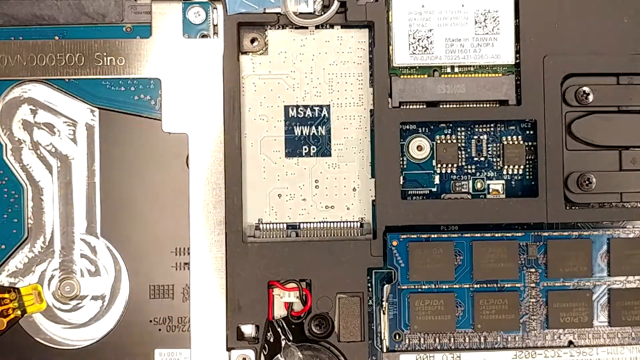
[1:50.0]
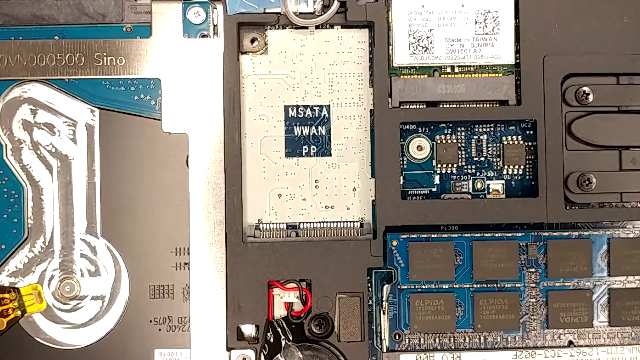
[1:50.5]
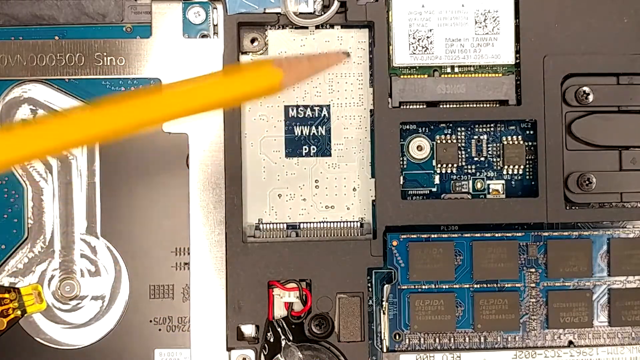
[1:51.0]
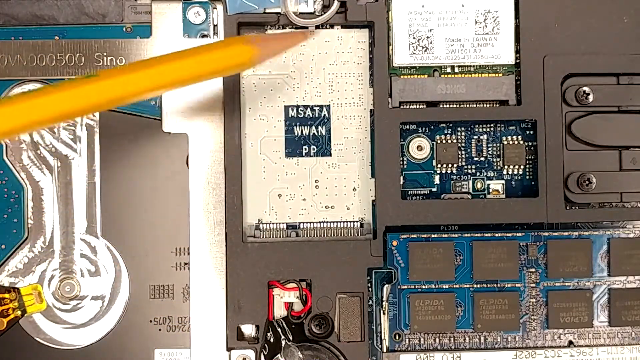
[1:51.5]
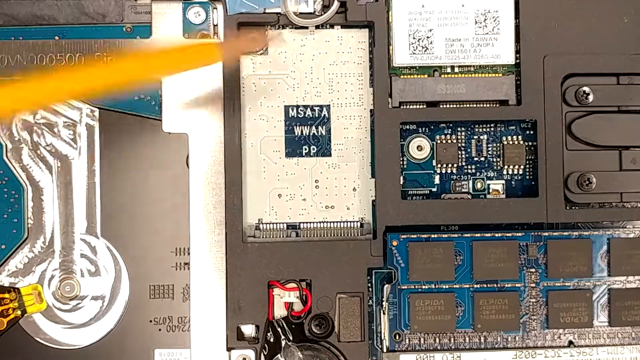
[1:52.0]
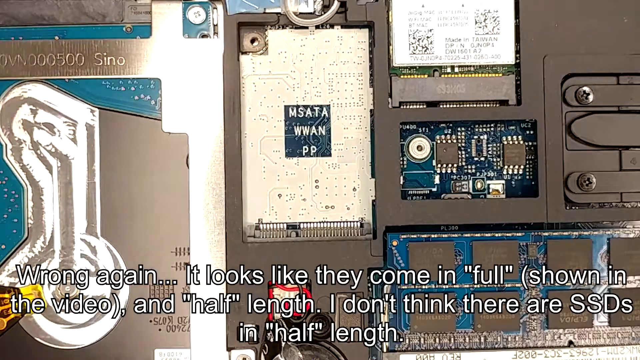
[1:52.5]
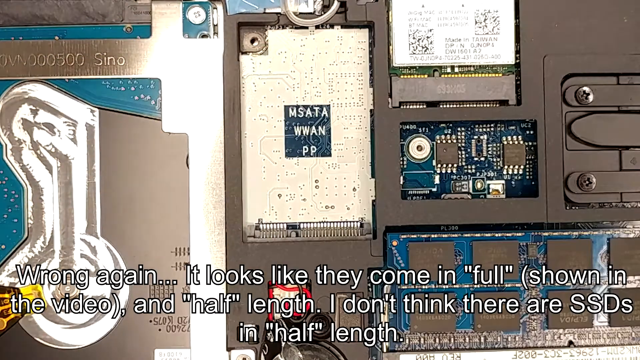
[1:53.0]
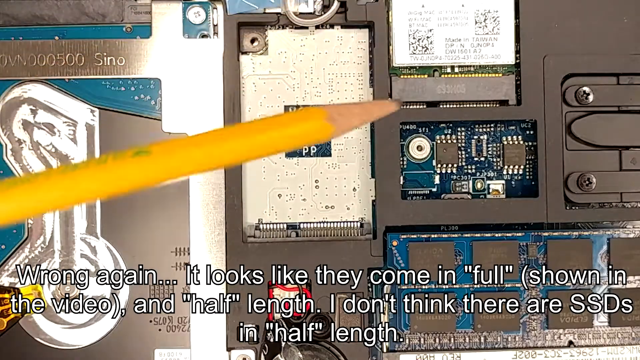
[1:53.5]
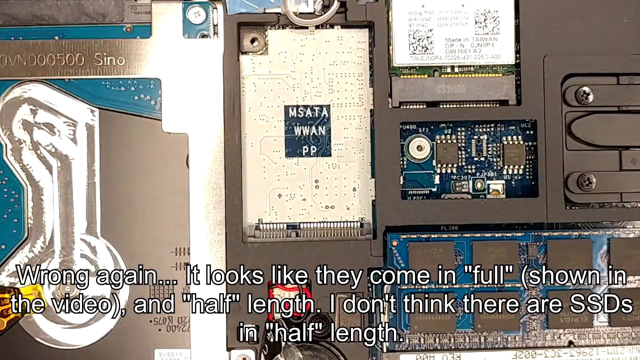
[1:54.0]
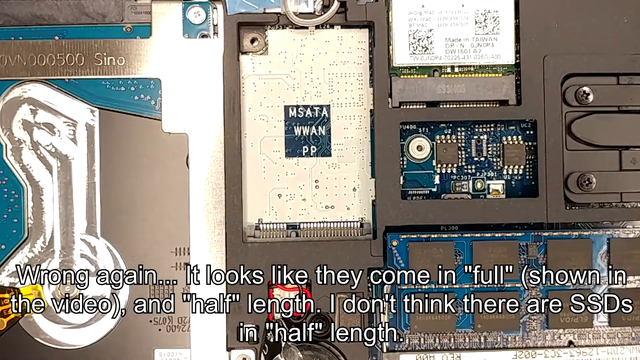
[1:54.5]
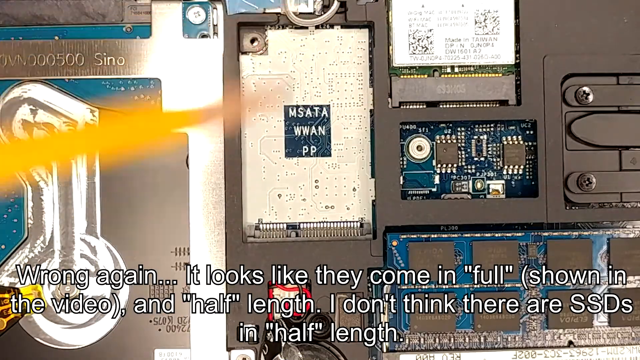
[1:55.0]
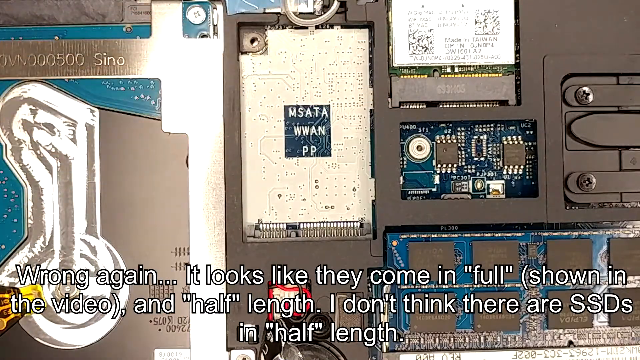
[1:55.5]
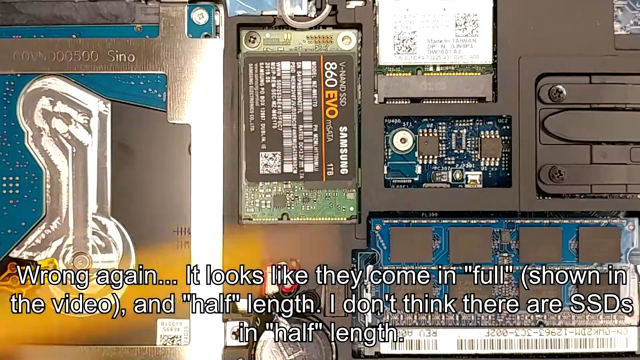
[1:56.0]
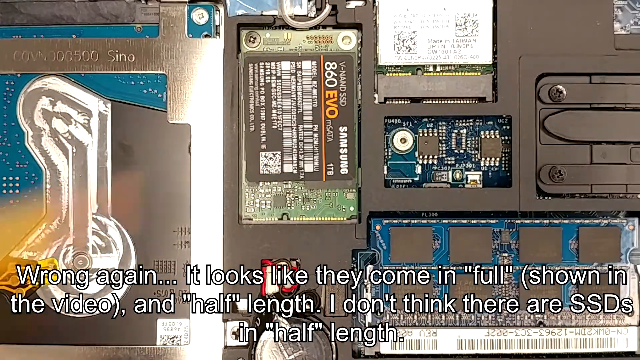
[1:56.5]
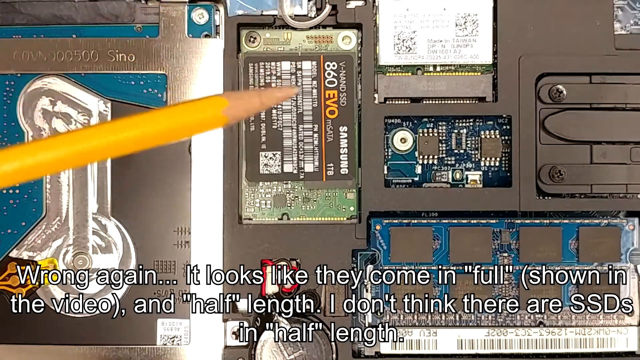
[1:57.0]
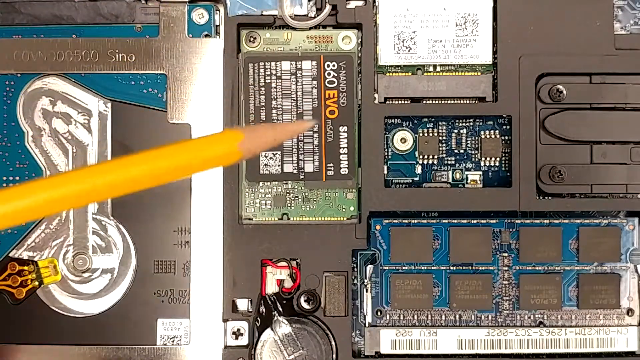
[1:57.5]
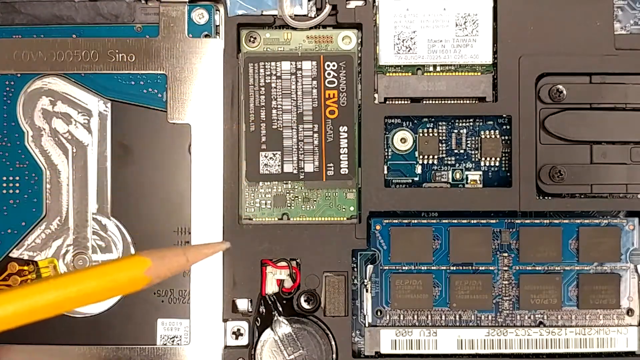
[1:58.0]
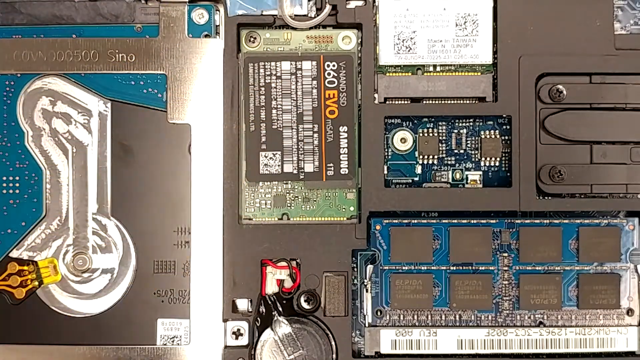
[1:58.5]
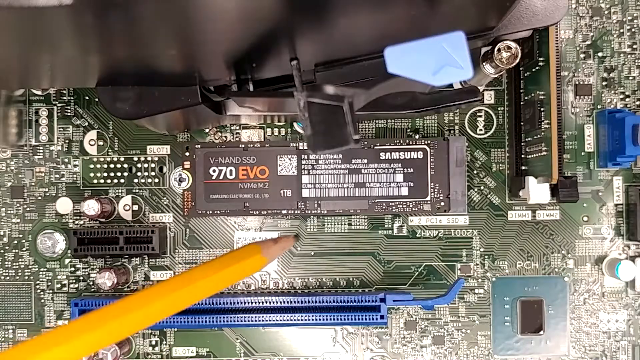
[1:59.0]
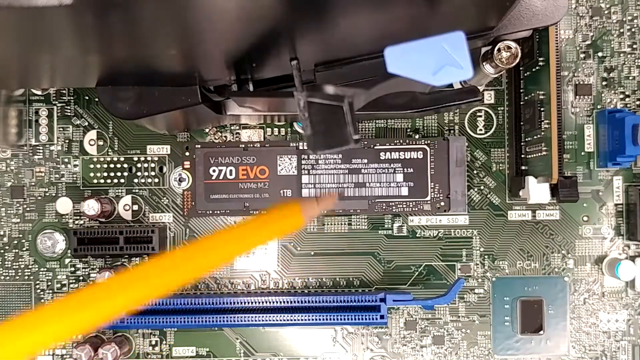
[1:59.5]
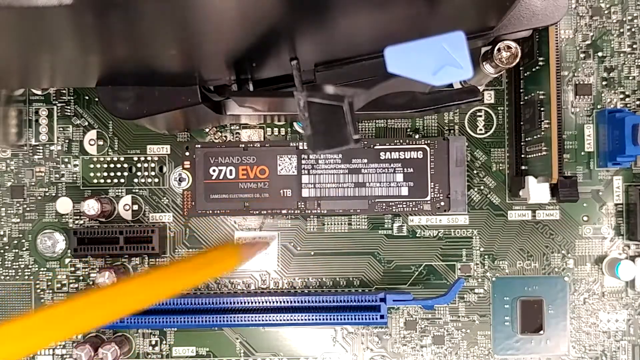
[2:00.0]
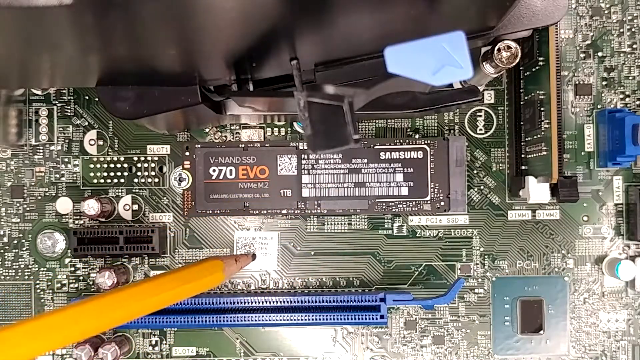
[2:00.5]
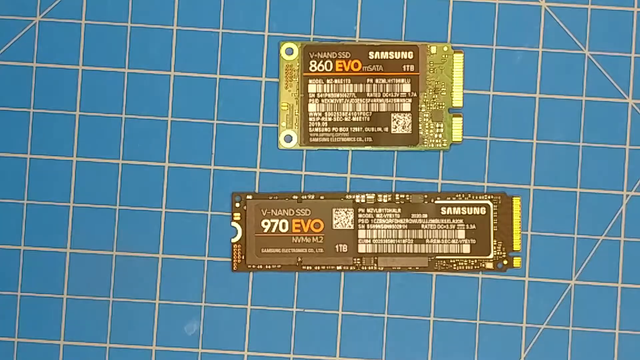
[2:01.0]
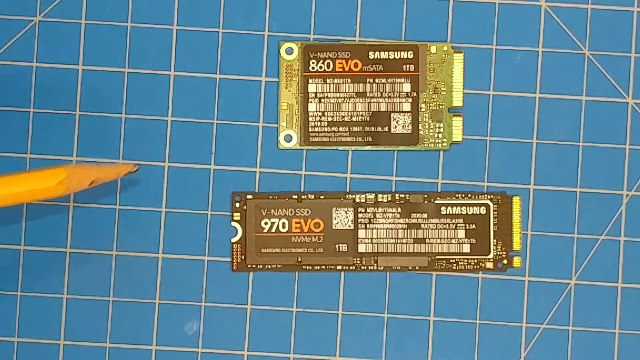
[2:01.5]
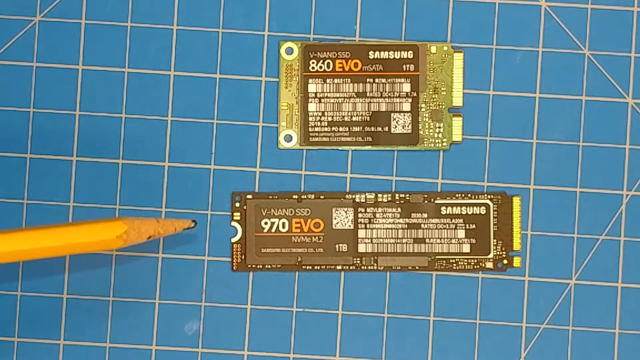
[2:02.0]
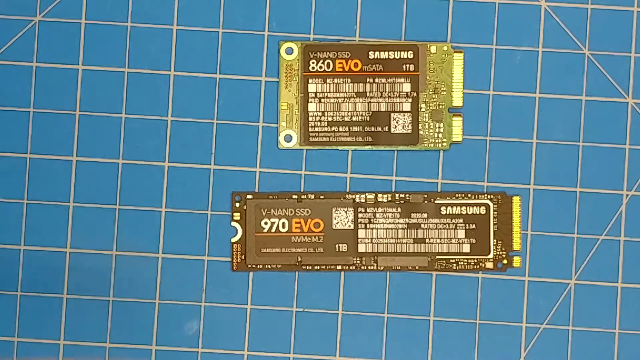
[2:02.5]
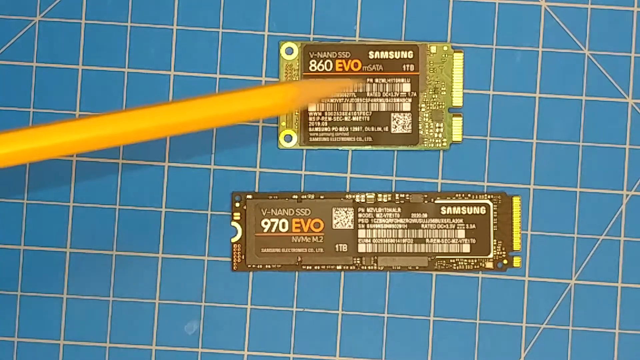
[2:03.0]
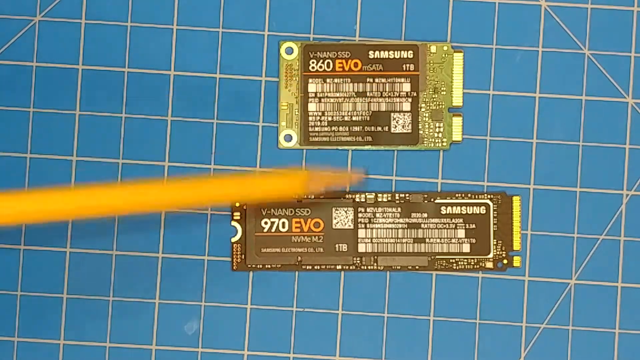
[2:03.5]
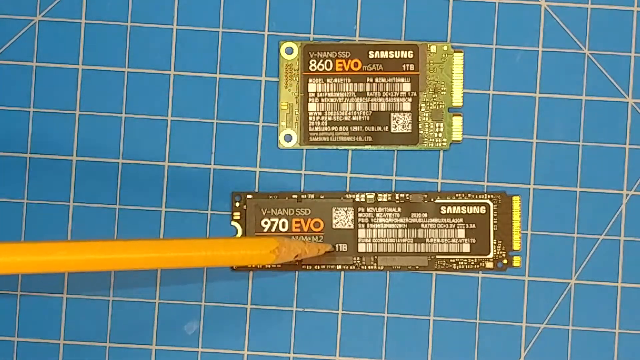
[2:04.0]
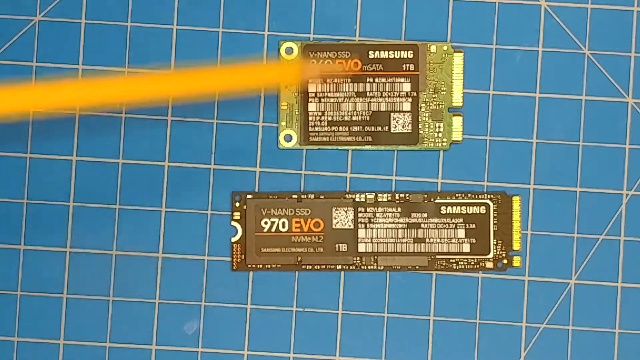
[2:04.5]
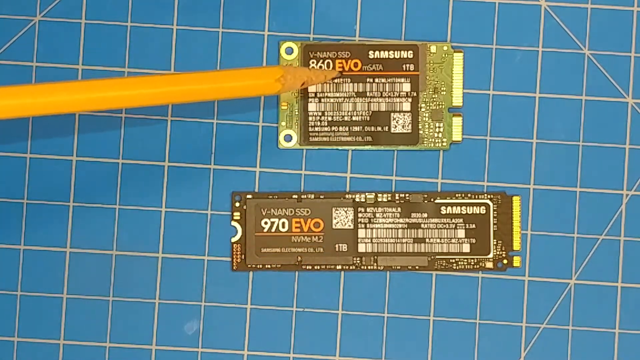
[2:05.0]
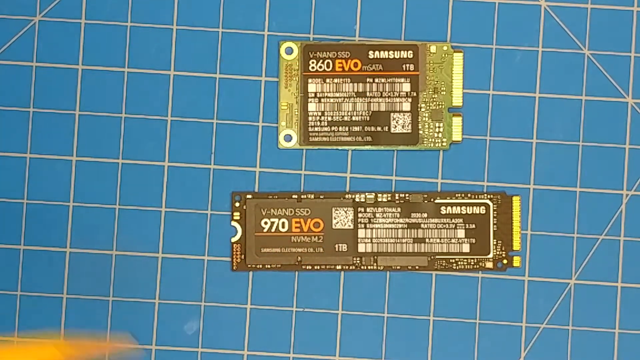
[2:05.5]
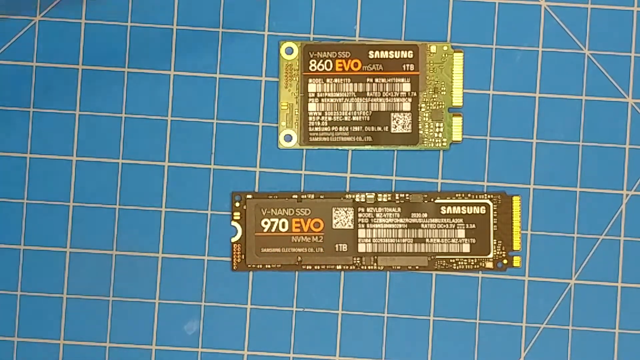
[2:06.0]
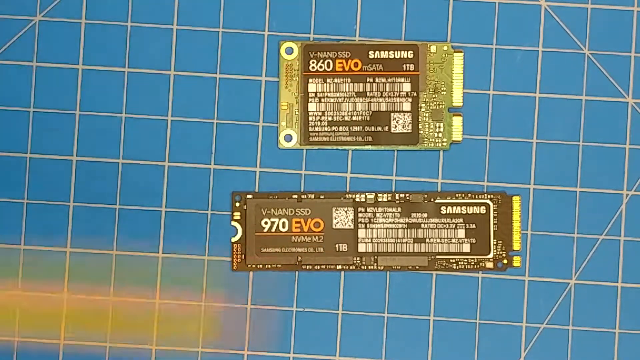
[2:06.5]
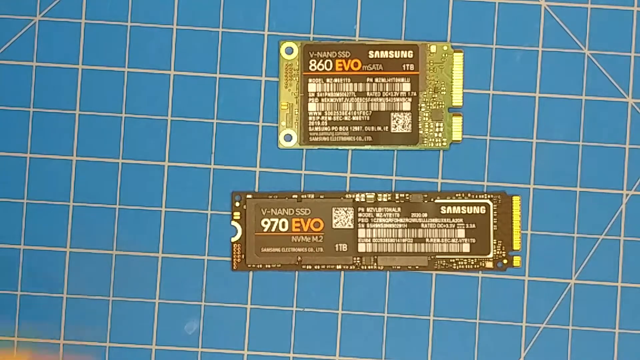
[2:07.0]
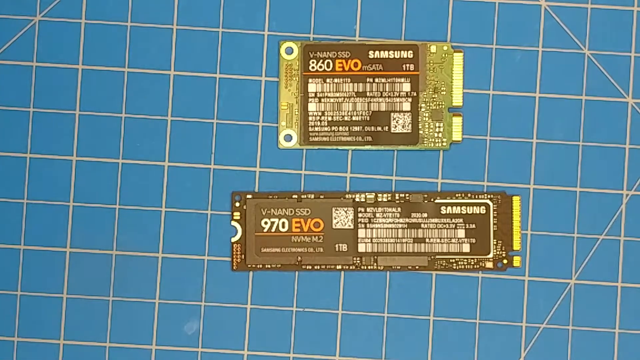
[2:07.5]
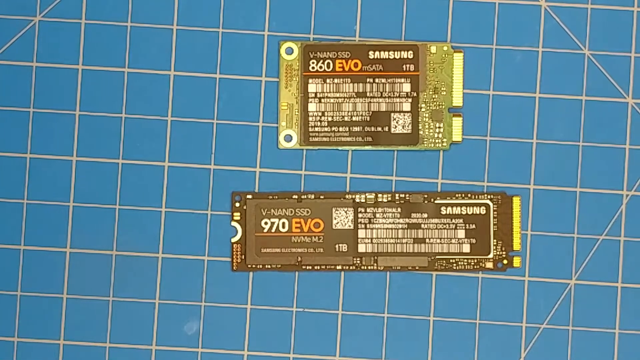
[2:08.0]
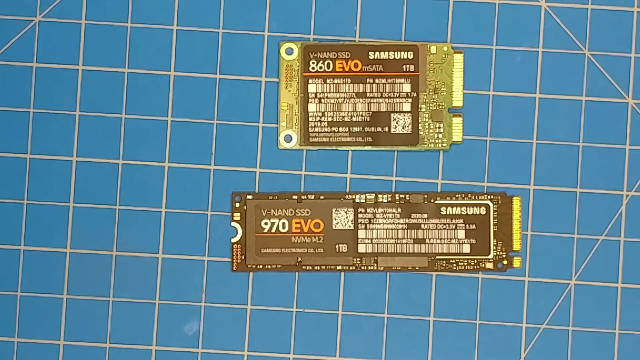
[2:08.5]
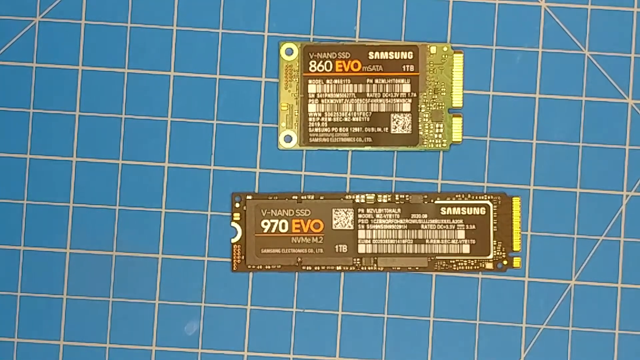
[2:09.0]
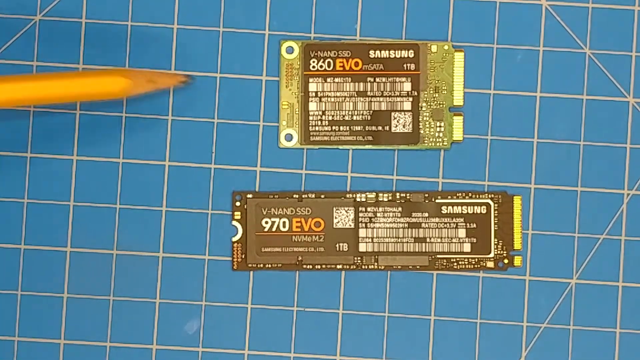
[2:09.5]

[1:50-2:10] What seems to be computer hardware is shown, with a circuit area probably belonging to a particular device. It looks like a panel has been removed, and this could be the bottom of a device, possibly a laptop. There is an area that reads "made in Taiwan", and there are a couple of screws that can be taken out. The person taps their pencil on the circuitry marked "WWAN". Text spread across the screen reads "This is wrong again. It looks like they come in full, shown in the video, and half-length." The person then pans over to the other circuits for comparison and taps on them again.